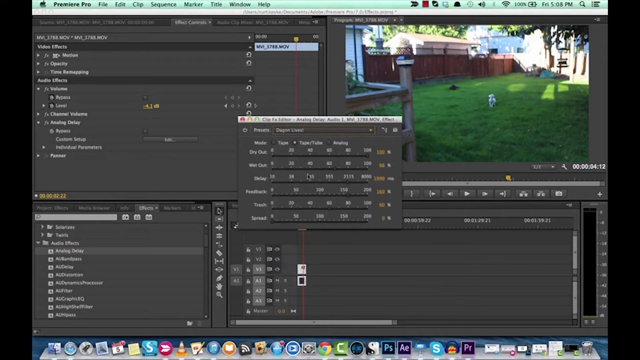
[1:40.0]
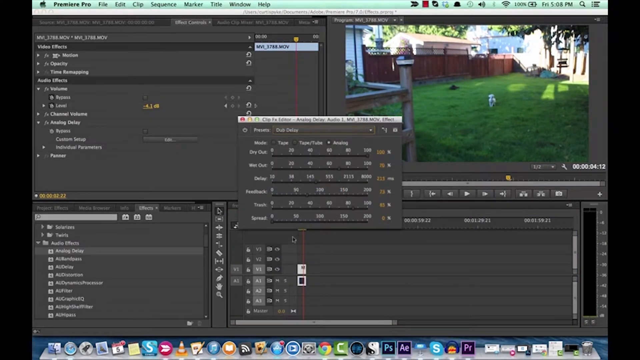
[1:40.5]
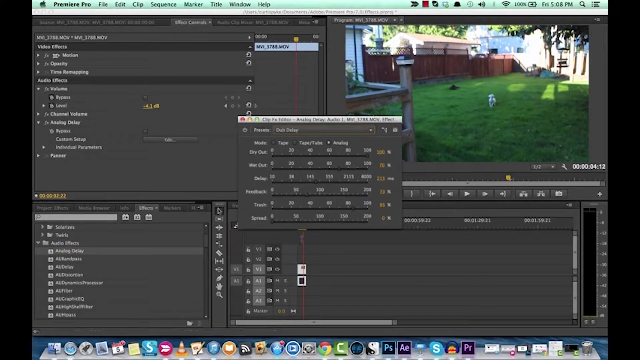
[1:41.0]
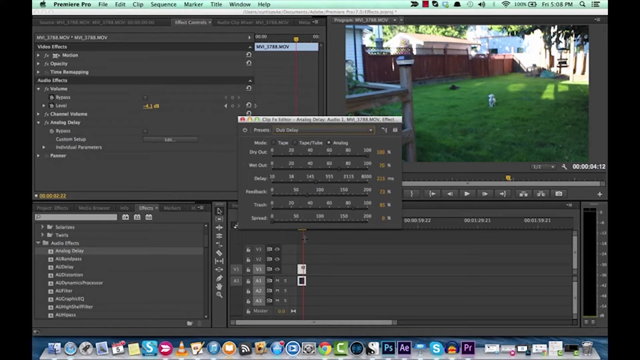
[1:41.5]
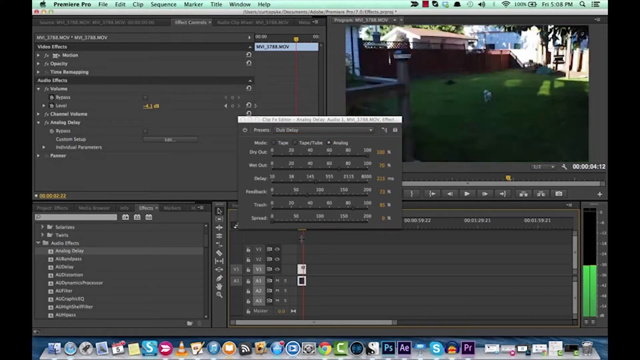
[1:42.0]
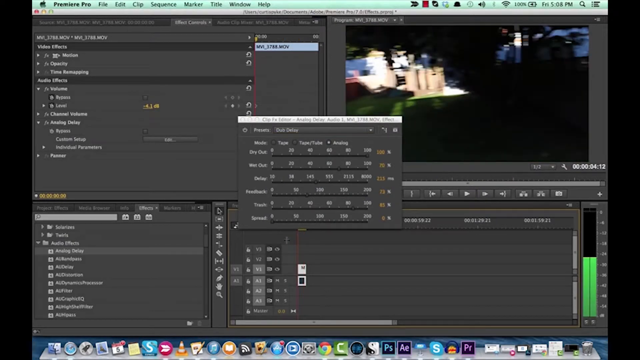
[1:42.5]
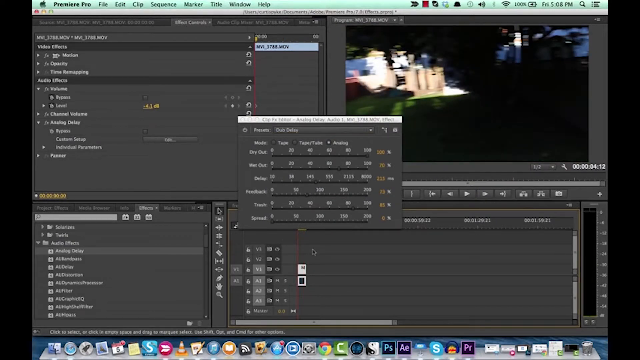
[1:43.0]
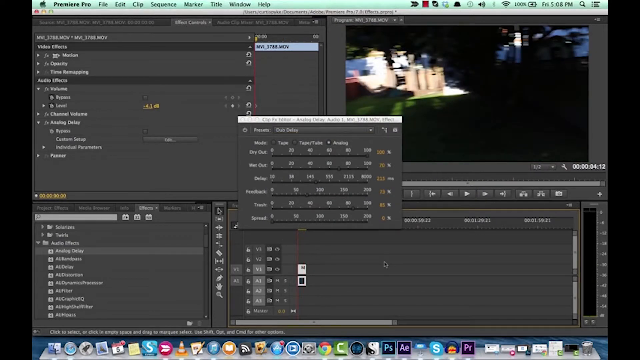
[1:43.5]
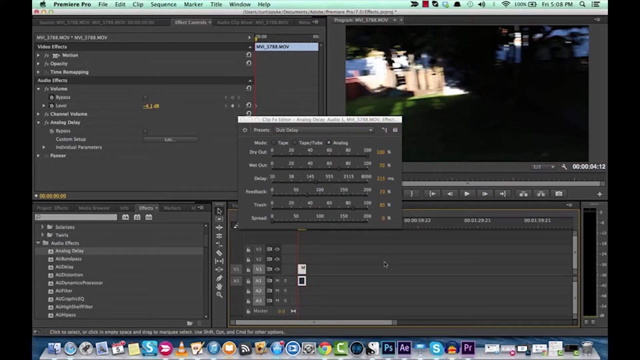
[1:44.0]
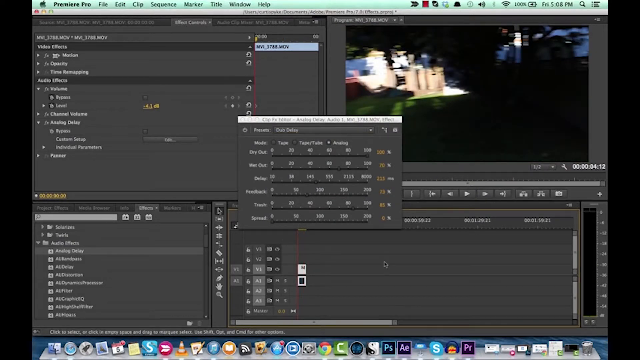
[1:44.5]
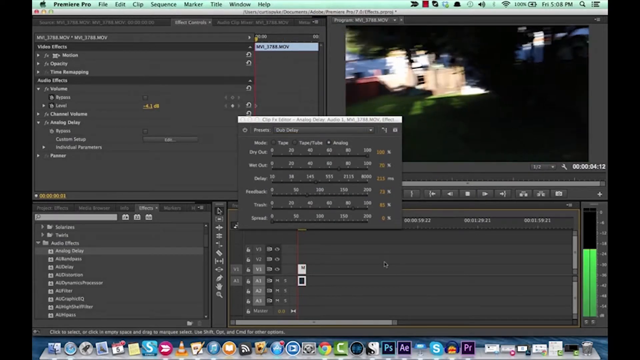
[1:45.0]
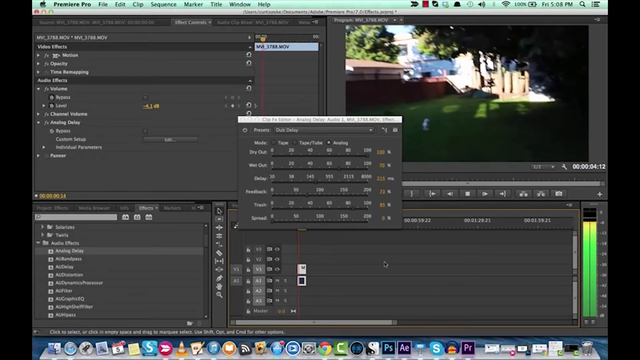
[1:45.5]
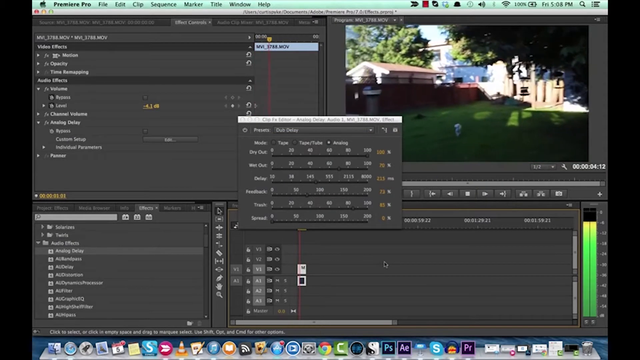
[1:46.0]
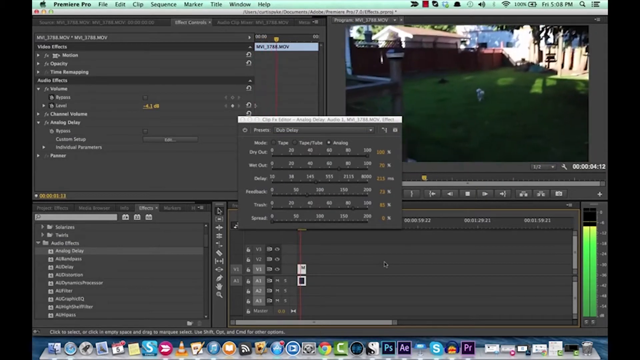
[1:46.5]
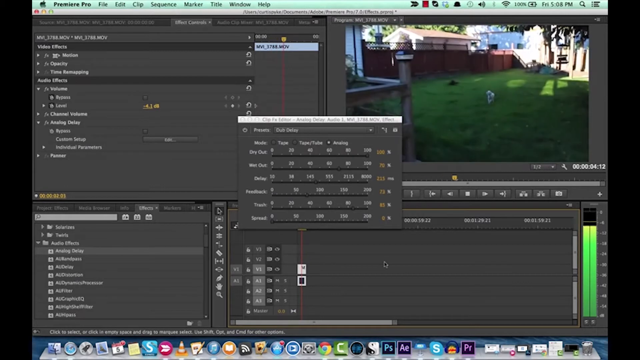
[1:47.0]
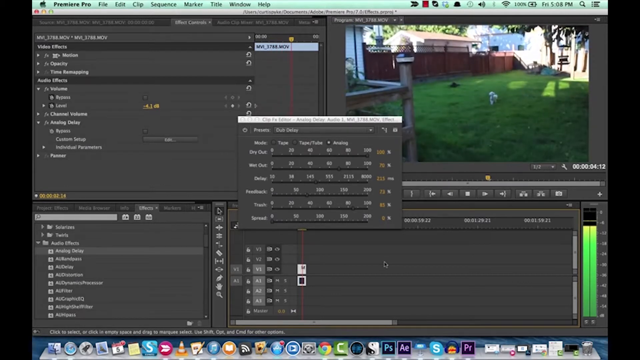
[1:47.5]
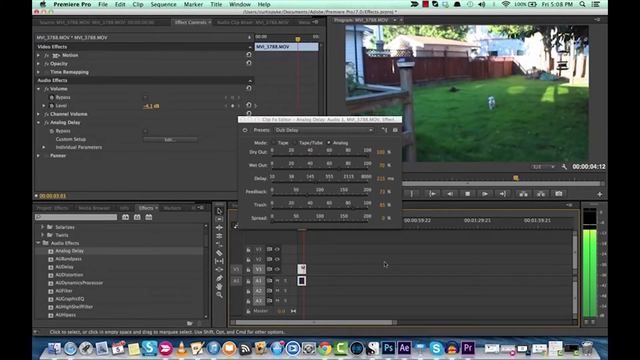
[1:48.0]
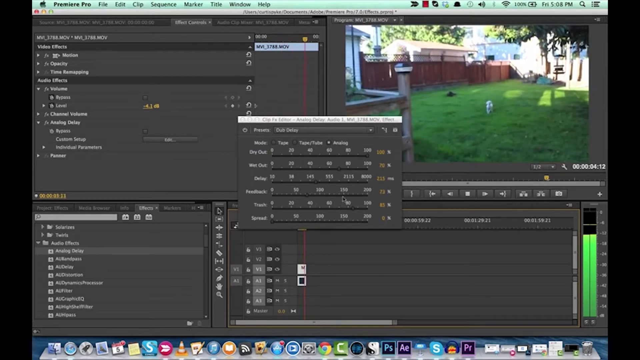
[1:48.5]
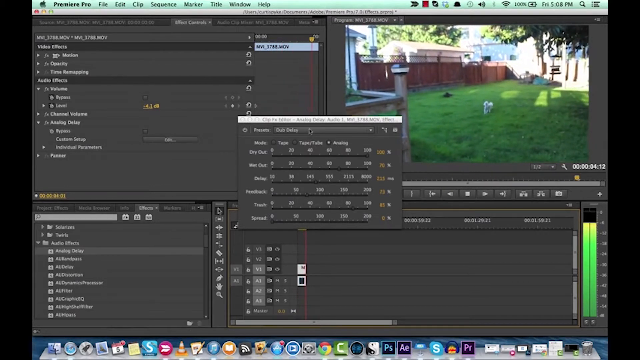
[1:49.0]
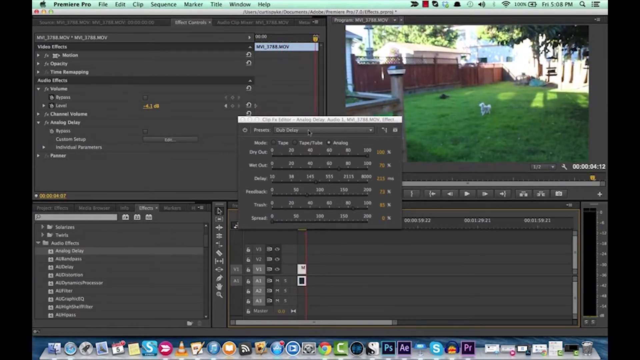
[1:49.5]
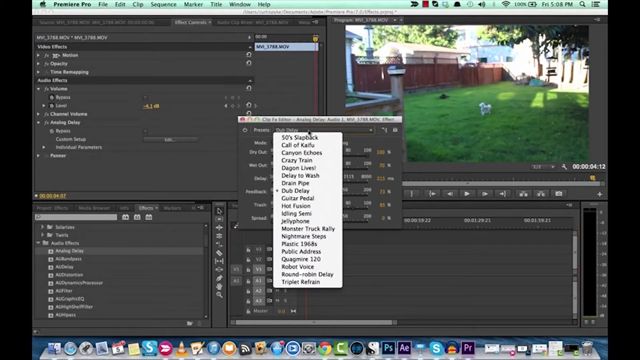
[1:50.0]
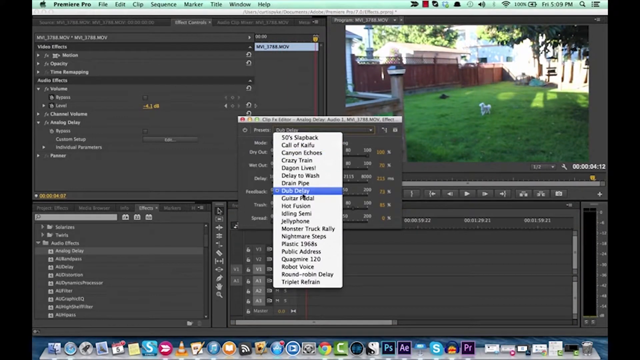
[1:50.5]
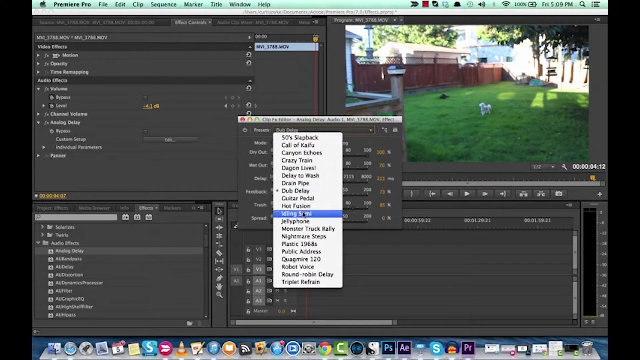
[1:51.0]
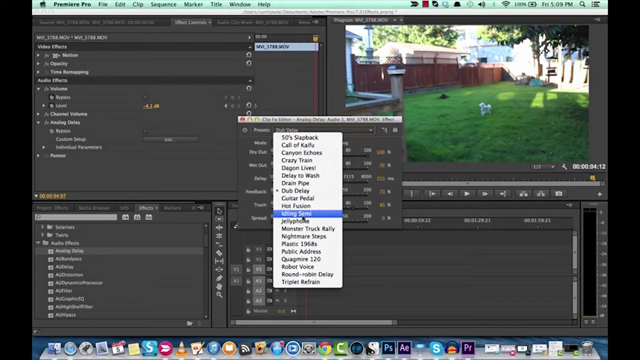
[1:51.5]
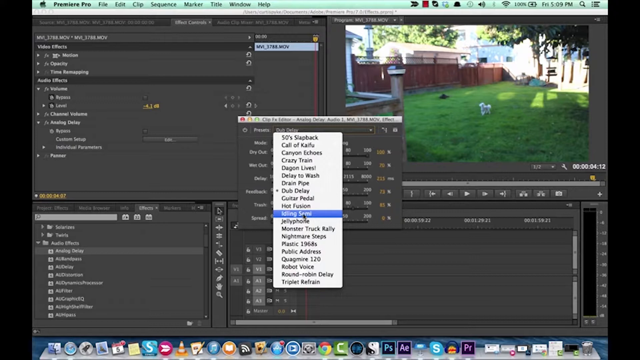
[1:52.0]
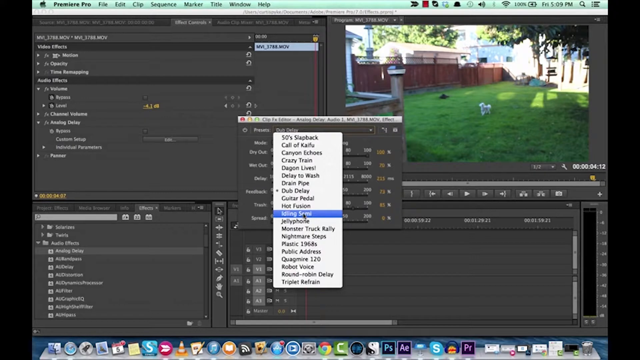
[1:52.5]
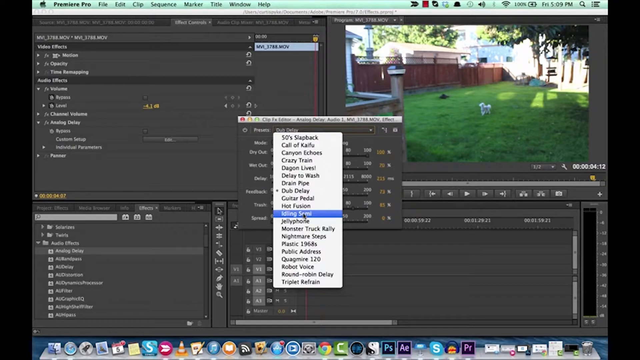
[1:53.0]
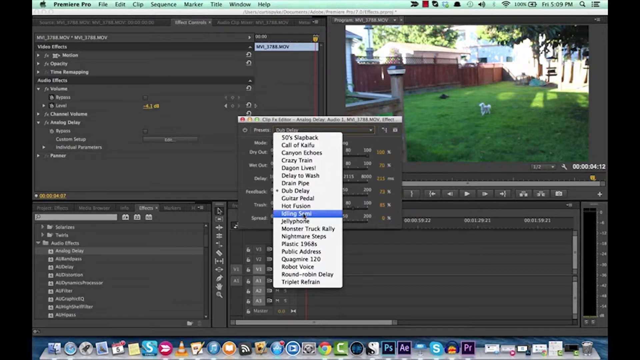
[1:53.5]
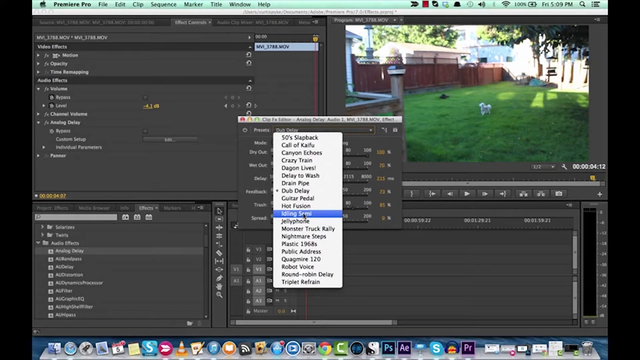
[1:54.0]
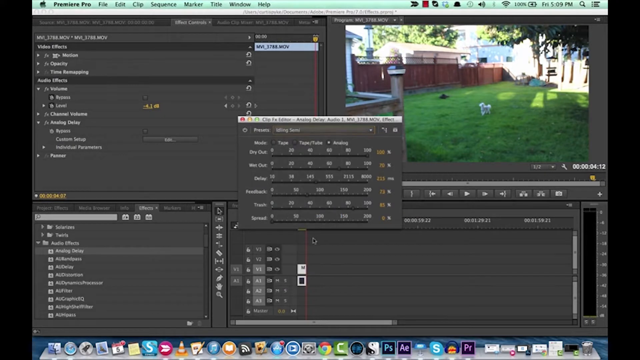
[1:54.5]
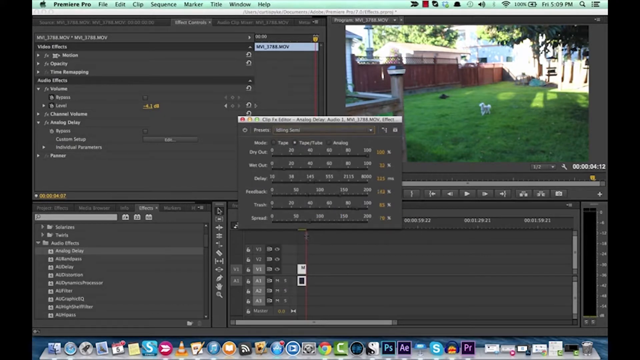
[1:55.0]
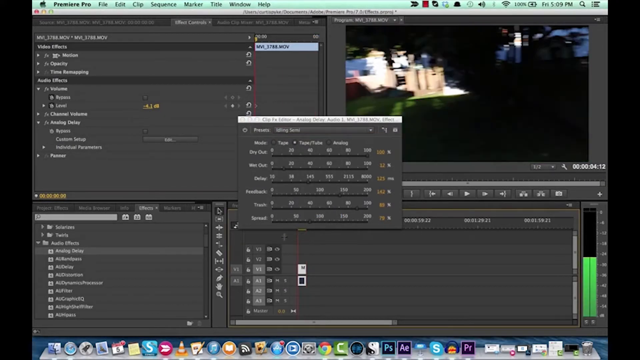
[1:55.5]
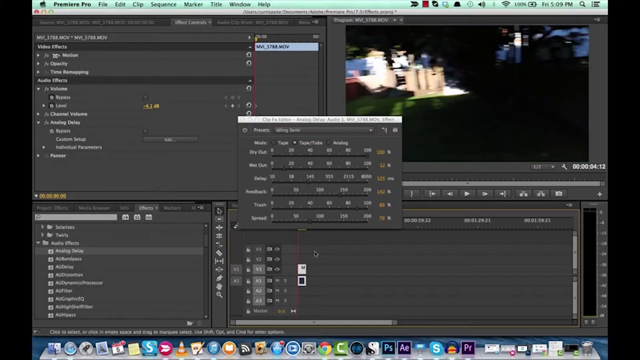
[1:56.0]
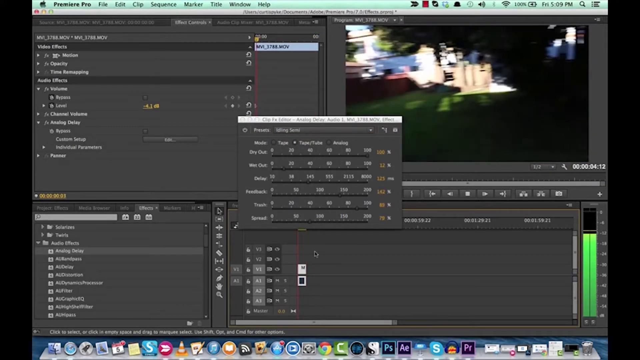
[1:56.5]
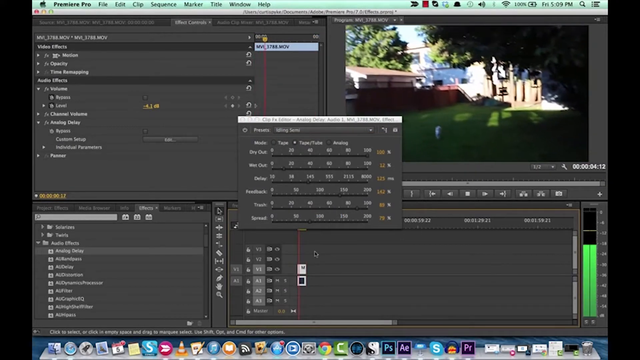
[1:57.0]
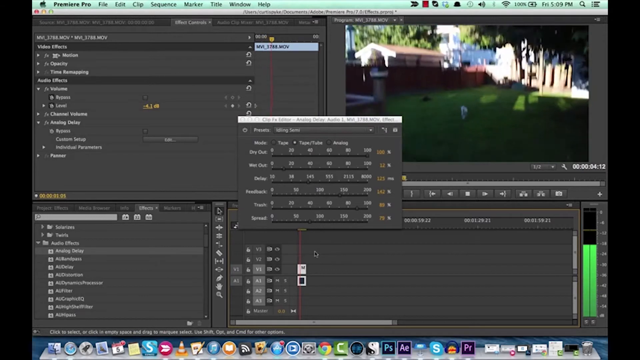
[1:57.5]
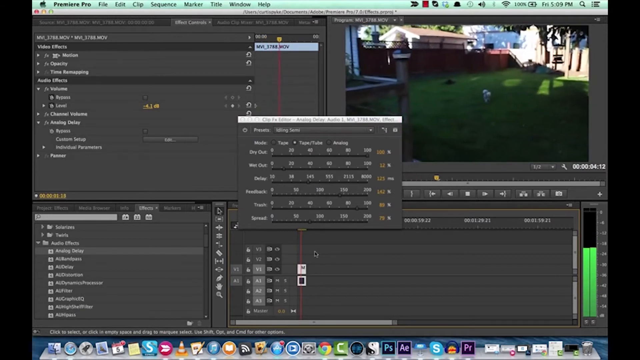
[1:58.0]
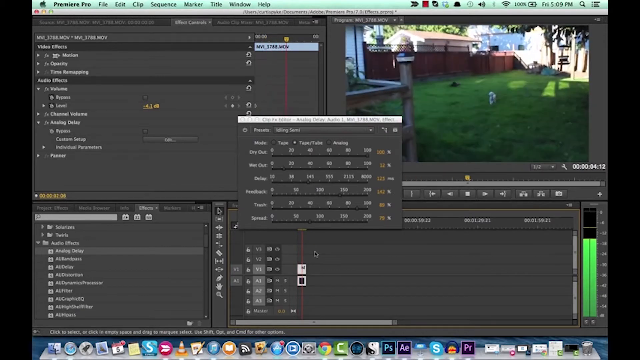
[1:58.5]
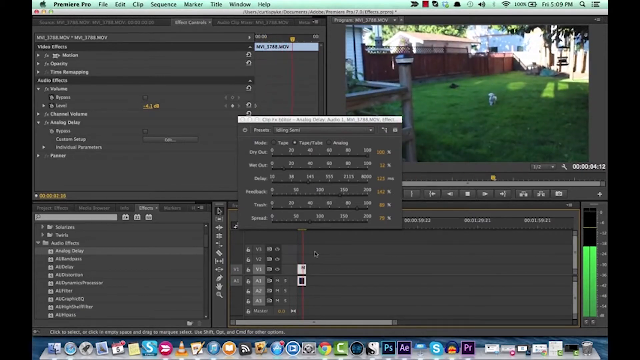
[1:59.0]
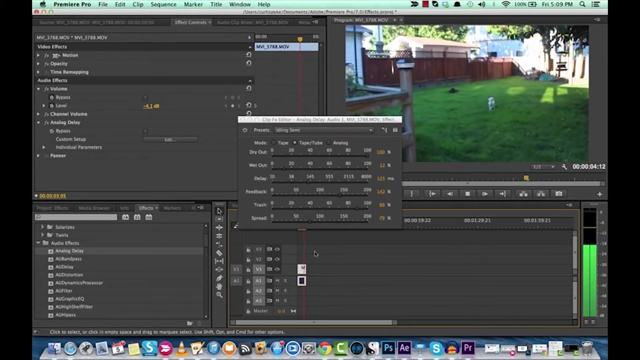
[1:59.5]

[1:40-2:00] The user restarts the preview, finding a moment in the footage where it is bright outside, then opens the Clip FX Editor, which contains a long list of presets. They move from the fifth preset further down to the ninth, then scroll down to one from Dragon Lives called Dub Delay. From Dub Delay they go to another preset whose name is hard to see. They keep moving lower in the list and restarting the preview, seemingly testing what each preset does.